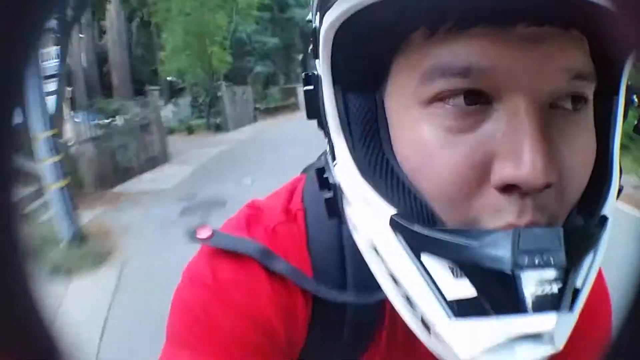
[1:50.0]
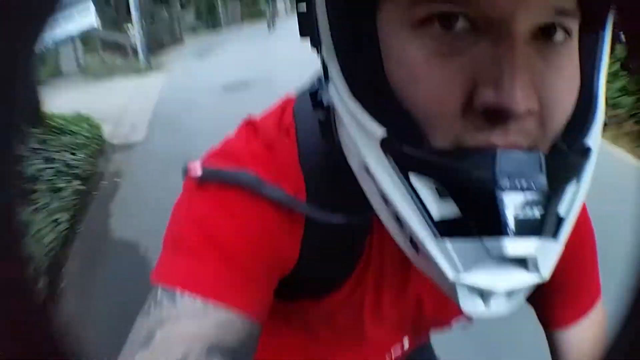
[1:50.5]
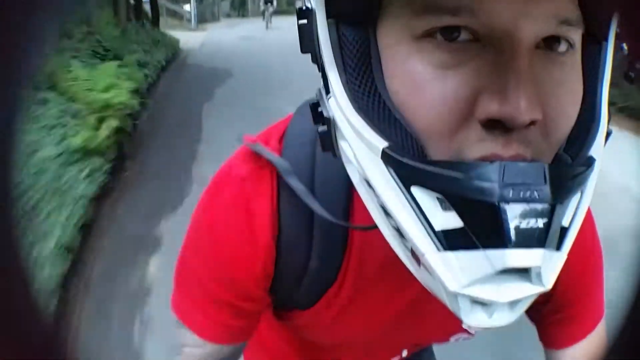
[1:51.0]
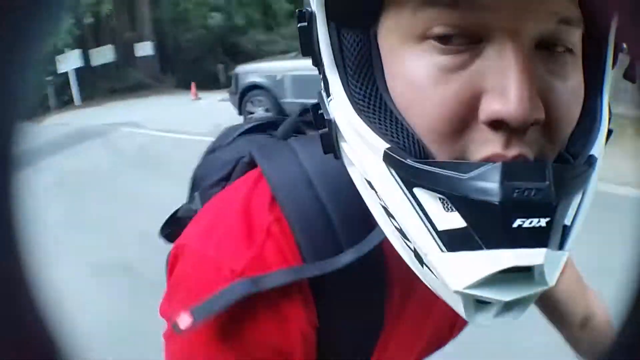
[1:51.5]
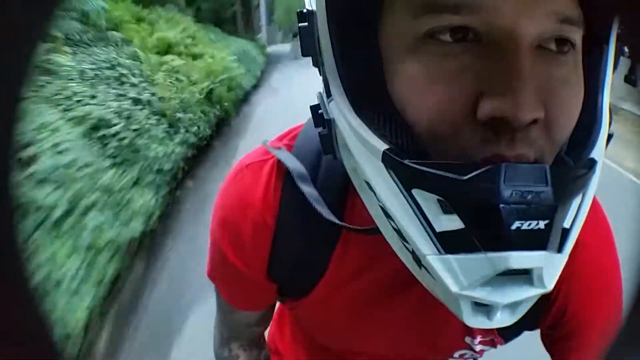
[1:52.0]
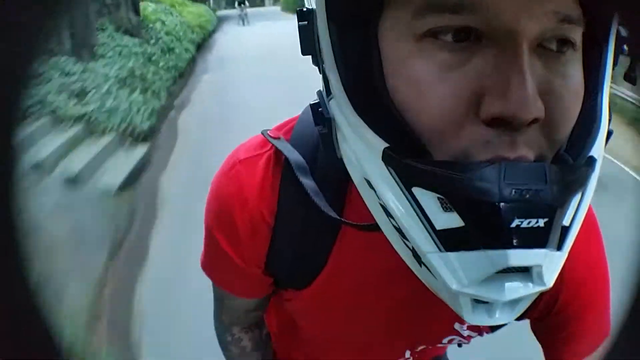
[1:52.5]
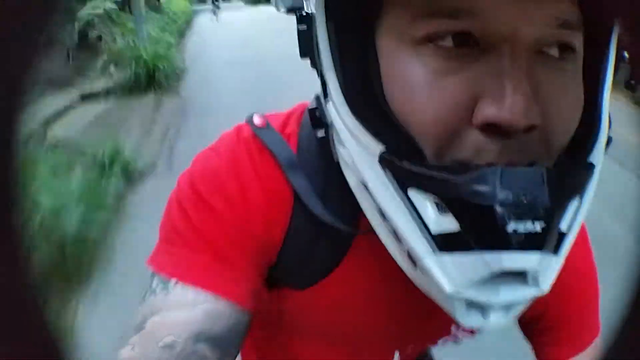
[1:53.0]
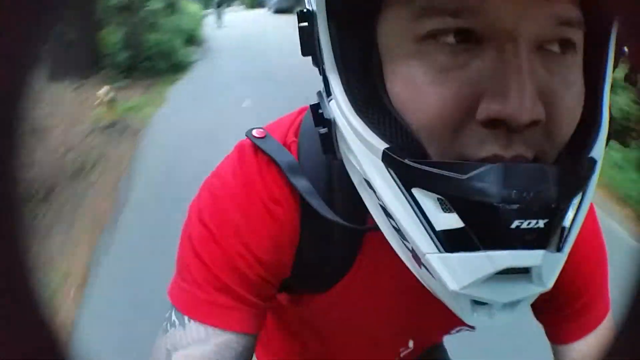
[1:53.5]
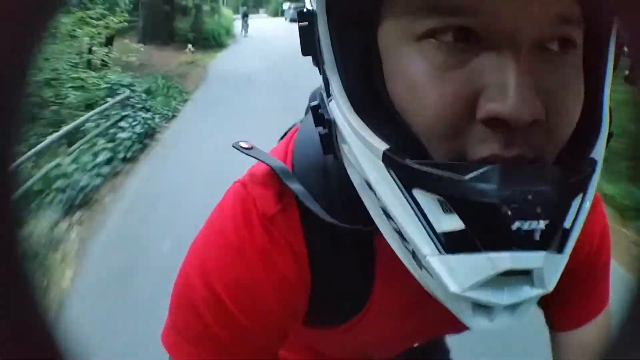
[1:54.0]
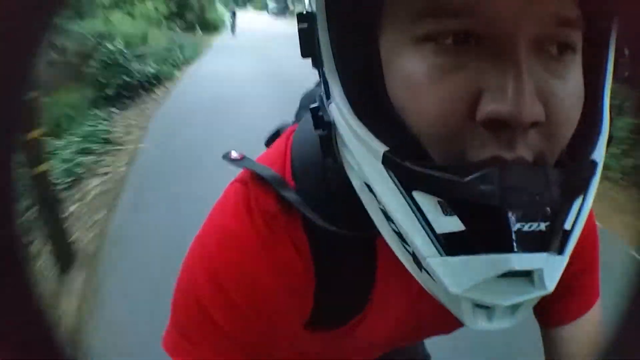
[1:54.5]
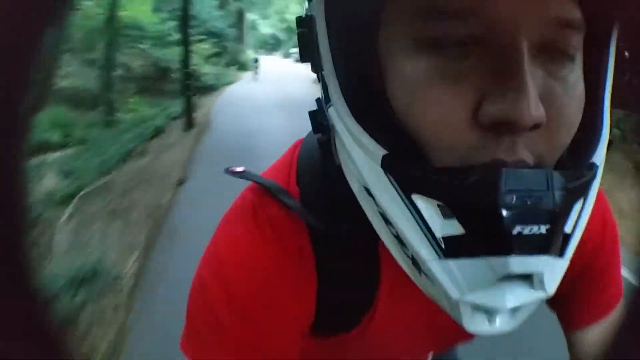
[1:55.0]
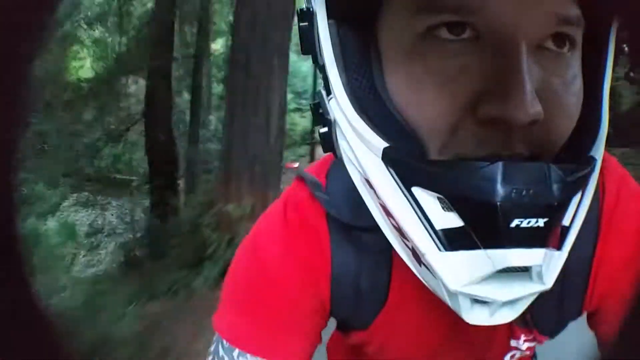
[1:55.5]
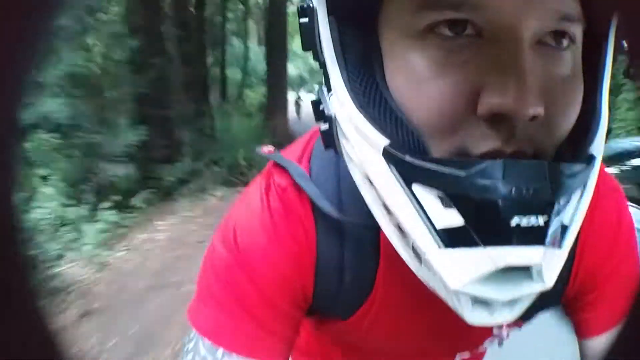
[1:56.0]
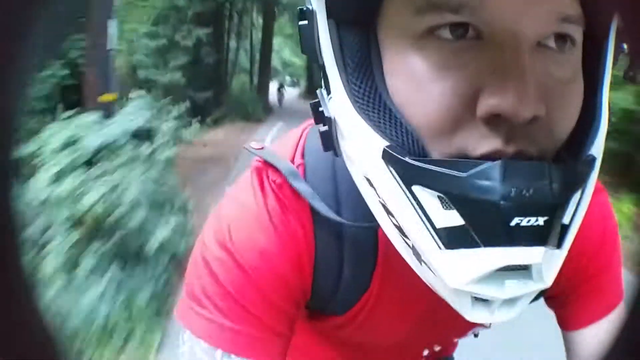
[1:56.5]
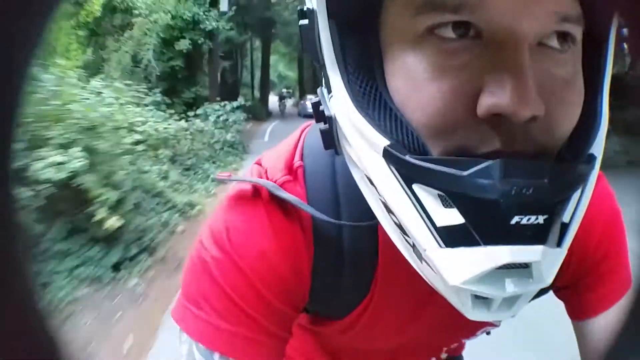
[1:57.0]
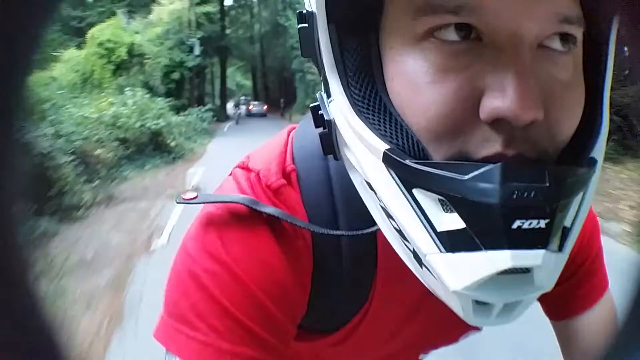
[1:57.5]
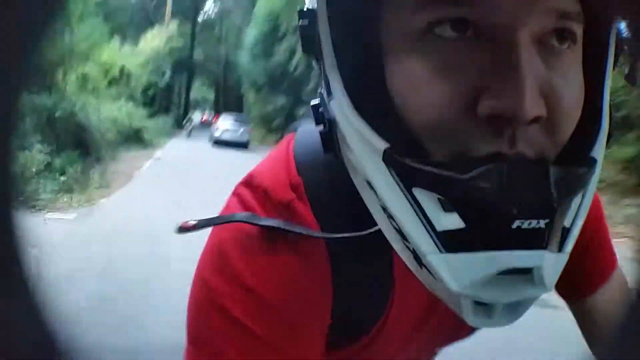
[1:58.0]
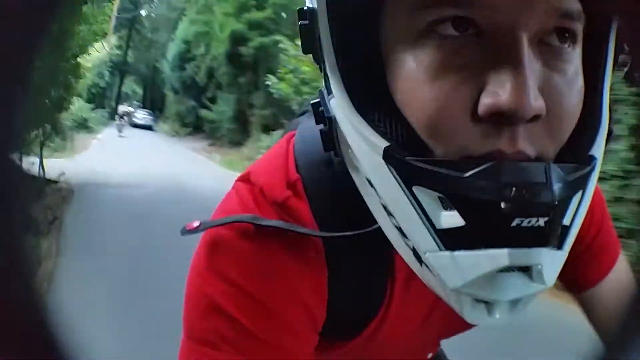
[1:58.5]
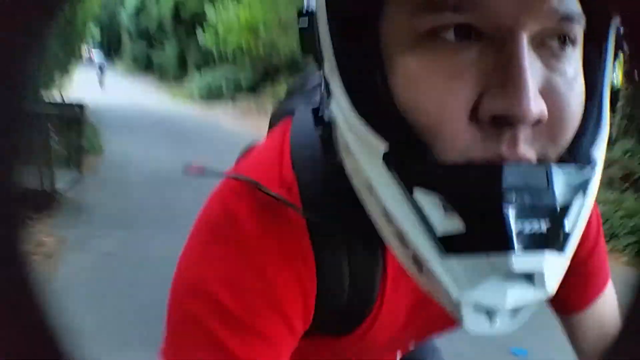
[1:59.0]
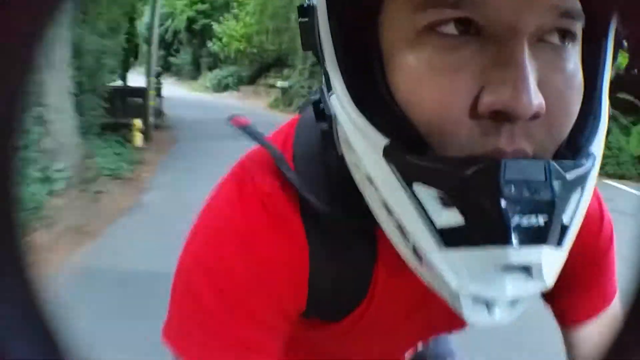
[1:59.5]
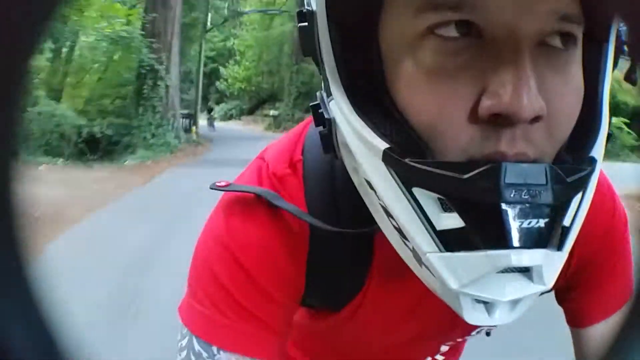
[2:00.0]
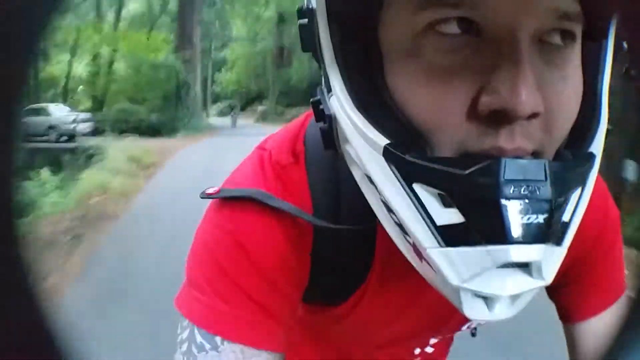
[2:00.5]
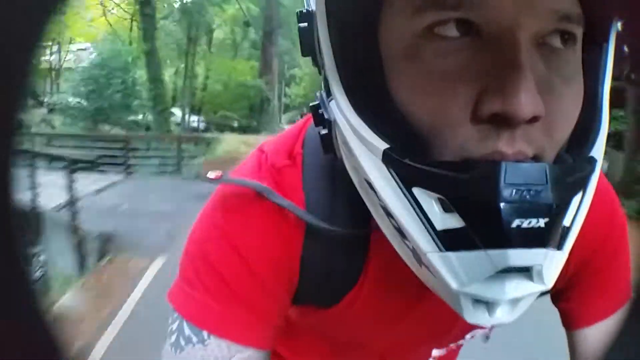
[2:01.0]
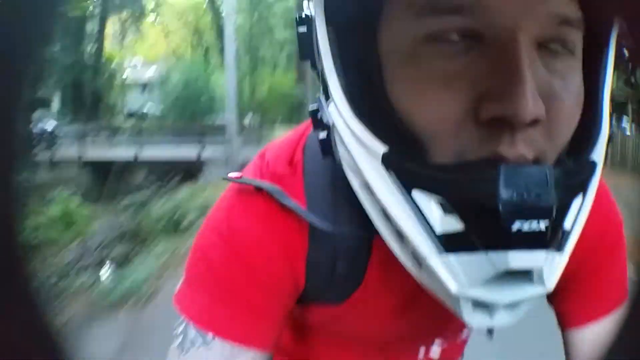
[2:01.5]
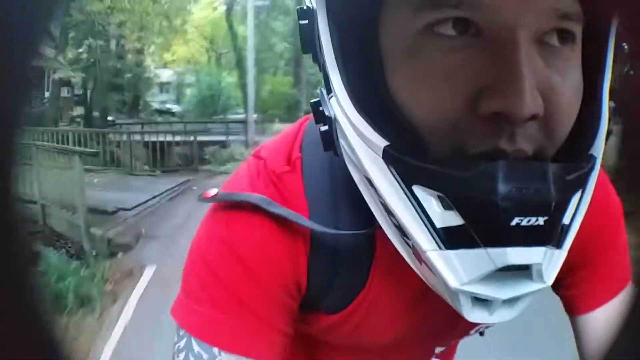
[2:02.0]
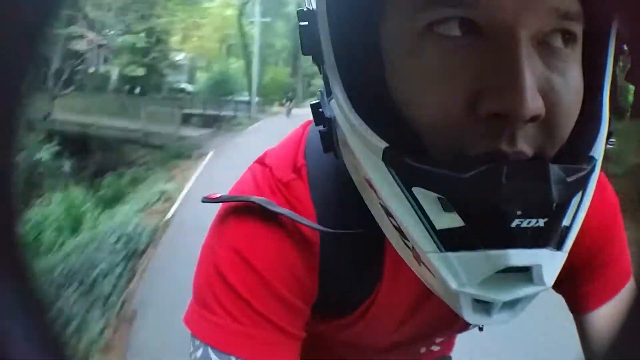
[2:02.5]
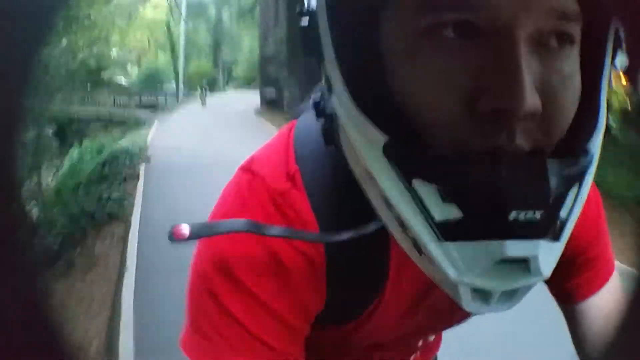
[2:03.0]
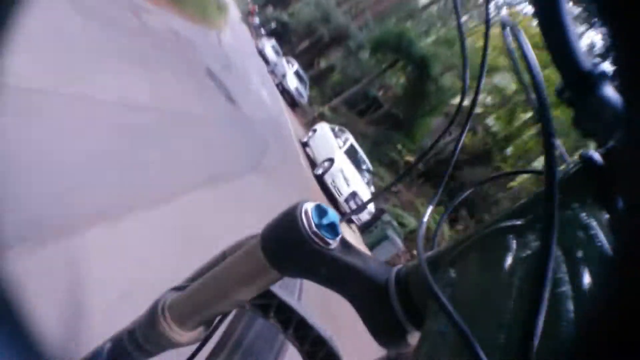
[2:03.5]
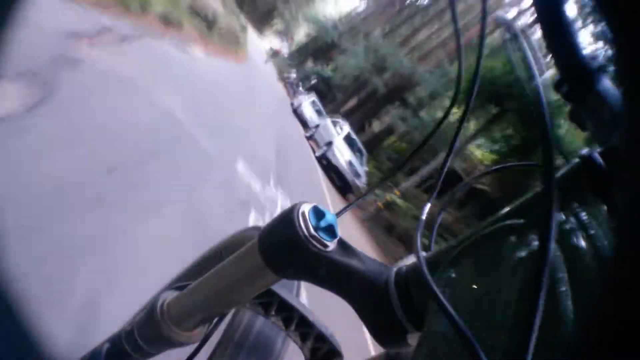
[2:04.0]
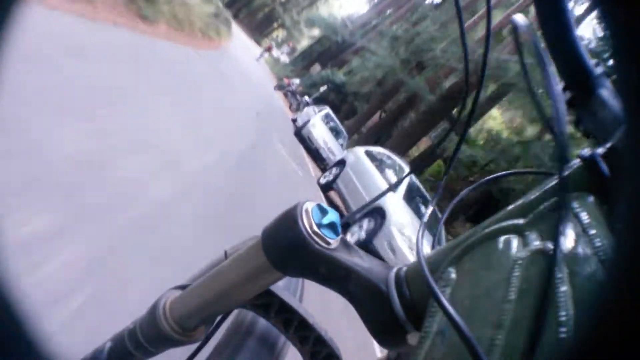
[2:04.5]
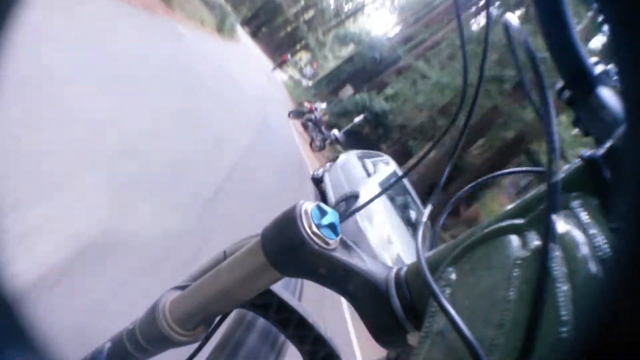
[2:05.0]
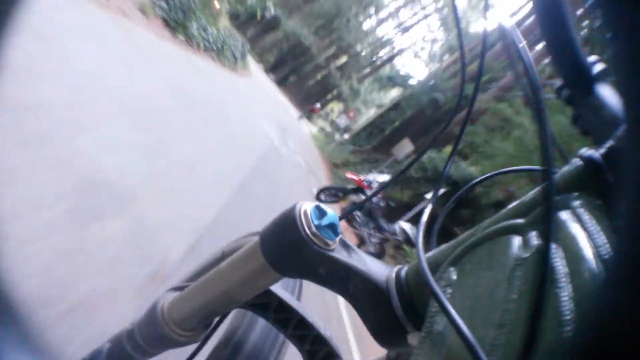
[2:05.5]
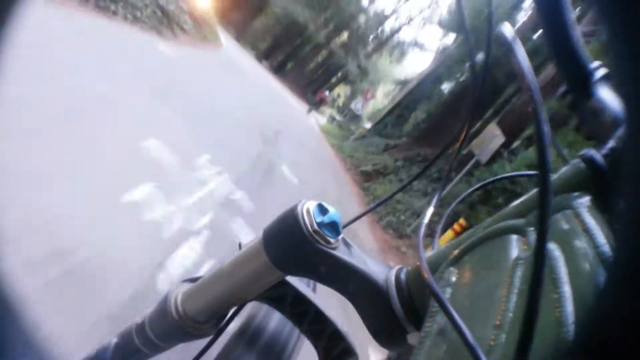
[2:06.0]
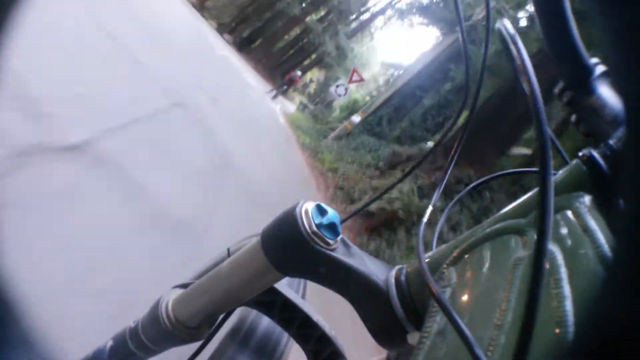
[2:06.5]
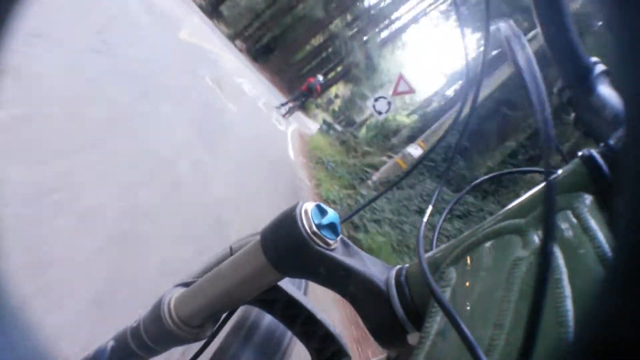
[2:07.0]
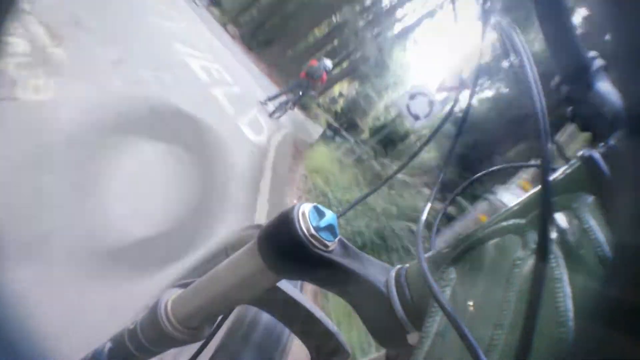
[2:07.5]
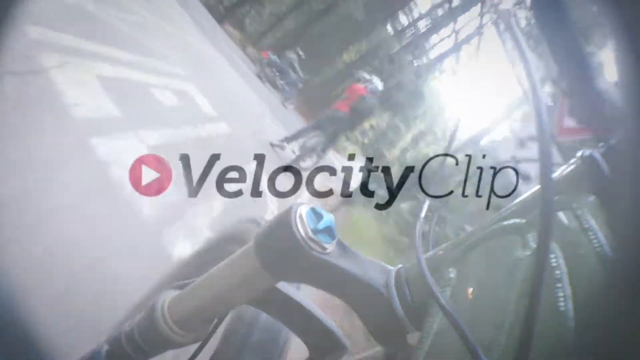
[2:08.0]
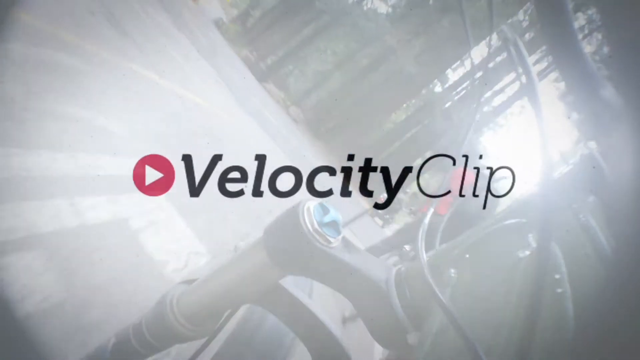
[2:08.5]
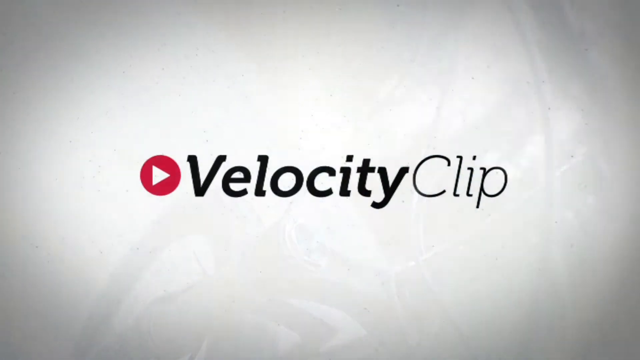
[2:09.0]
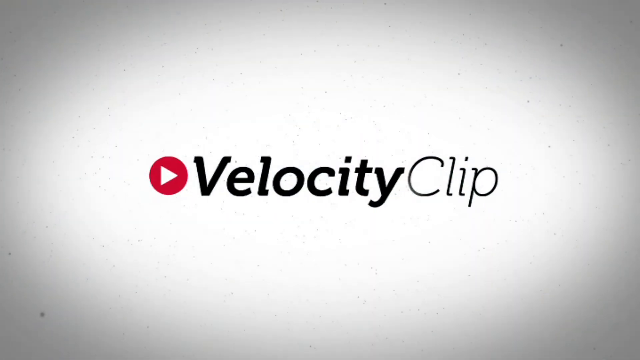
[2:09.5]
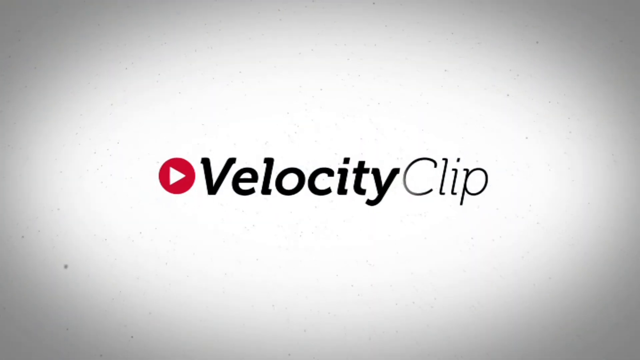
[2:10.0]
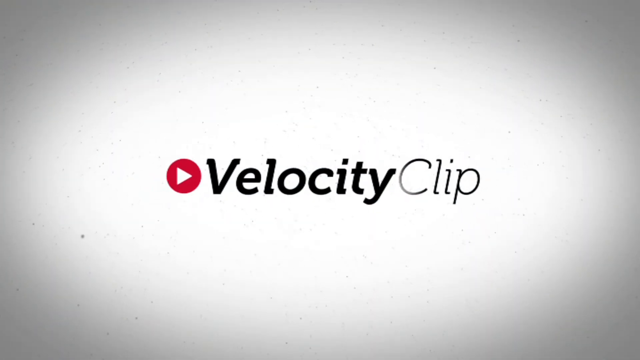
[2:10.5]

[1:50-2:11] In a mountain setting during the daytime, in a rather warm climate, the two bicyclists show the capabilities of cameras attached to their helmets as they ride through a rustic area. The shot begins on the face of the bicyclist in the red shirt, who has fair skin; his white helmet comes around his face, covering his chin as well as the sides and top of his head. On the left side as he rides, in what looks like an uphill area, there are some homes and driveways. In the far distance, the space between him and the bicyclists behind him grows larger. On the left side of the road are two small bridges, perhaps going over a stream, leading to some homes. The video ends with a white screen showing the words "velocity clip" again in black text, with a small YouTube logo on the left: a white triangle or arrow pointing to the right in a solid red circle.